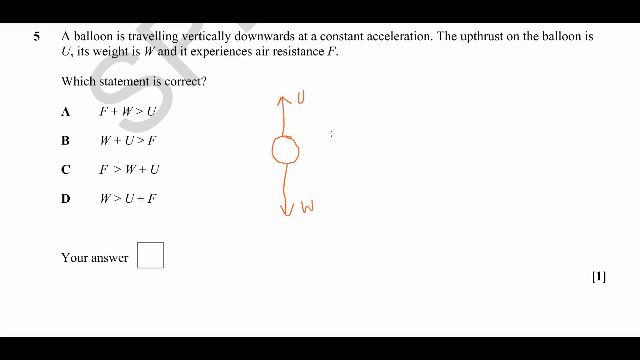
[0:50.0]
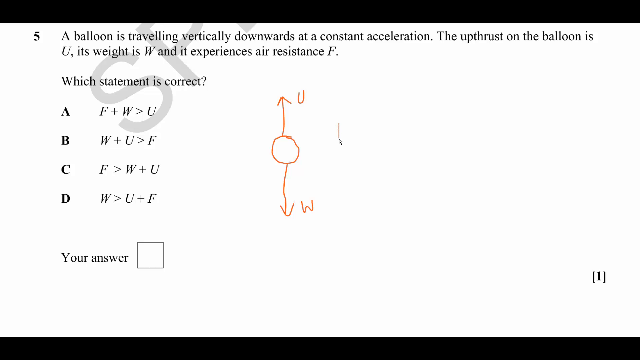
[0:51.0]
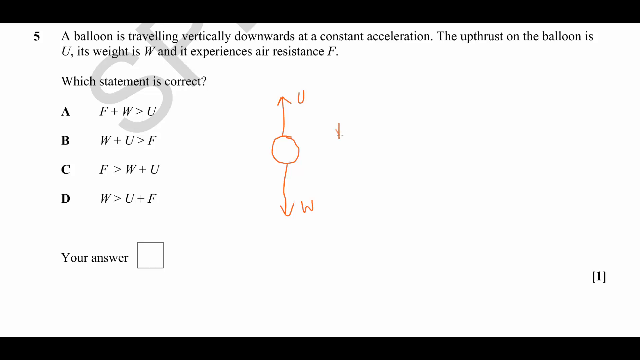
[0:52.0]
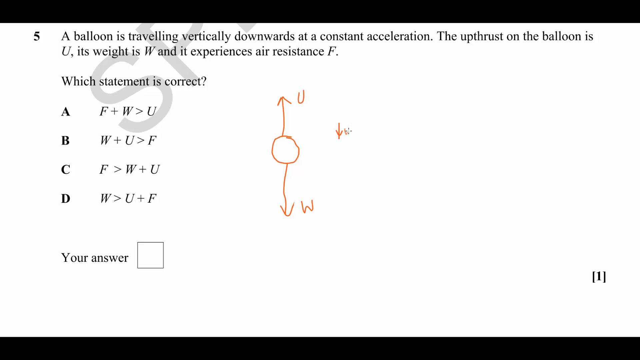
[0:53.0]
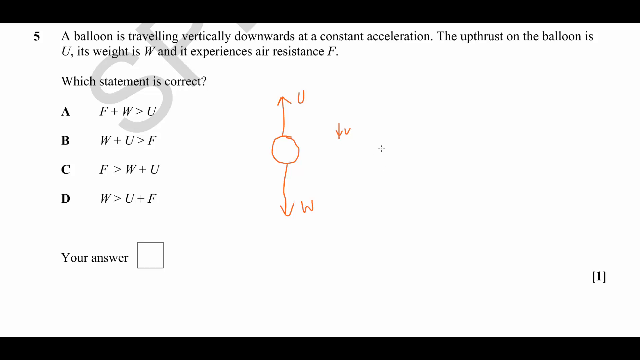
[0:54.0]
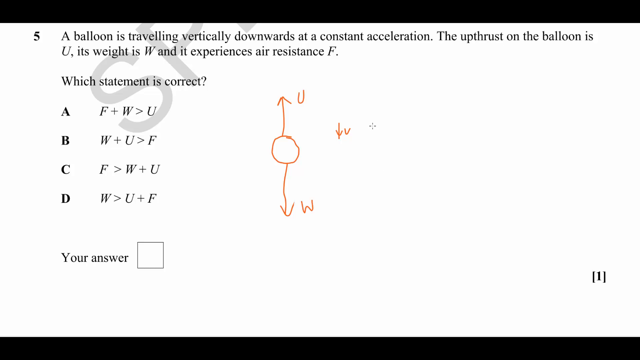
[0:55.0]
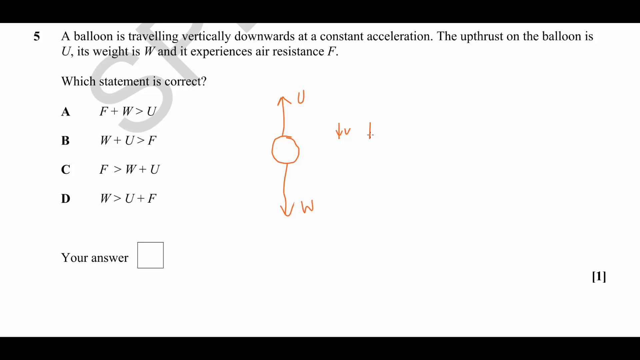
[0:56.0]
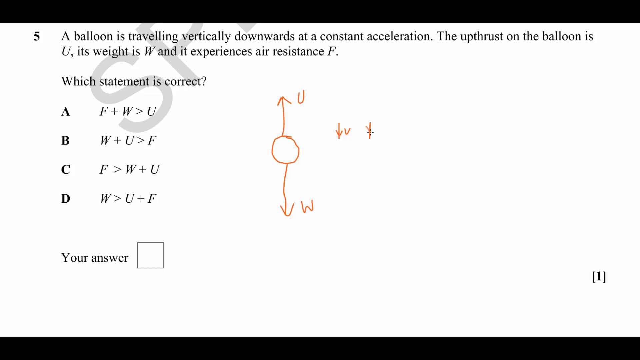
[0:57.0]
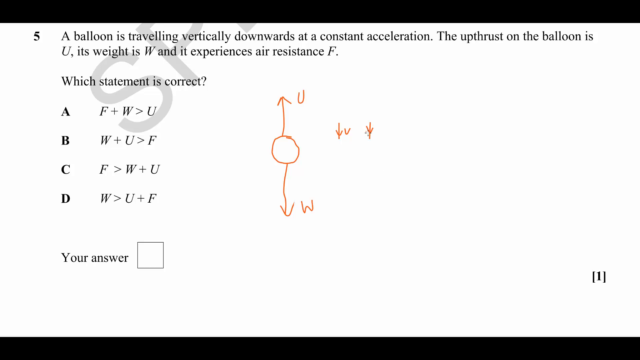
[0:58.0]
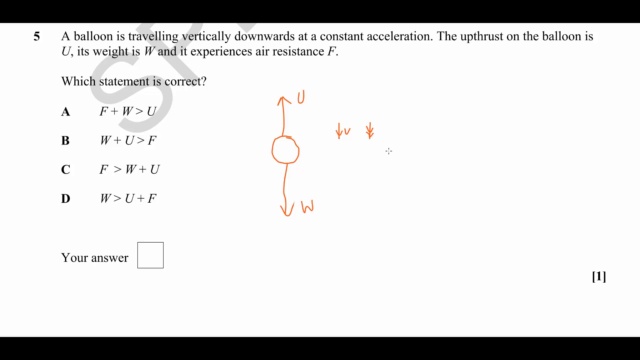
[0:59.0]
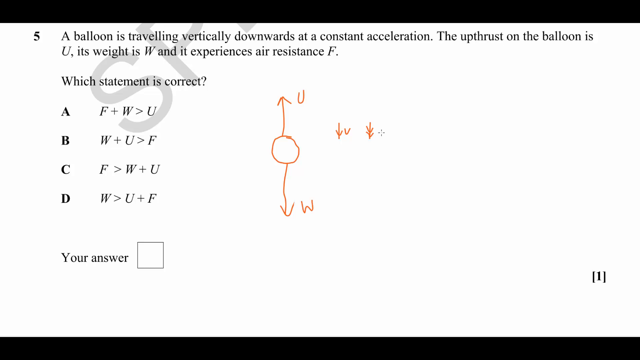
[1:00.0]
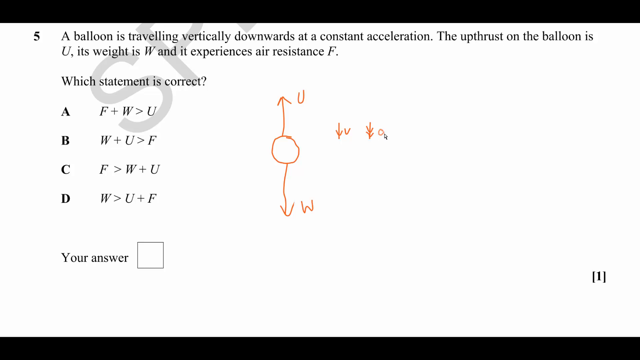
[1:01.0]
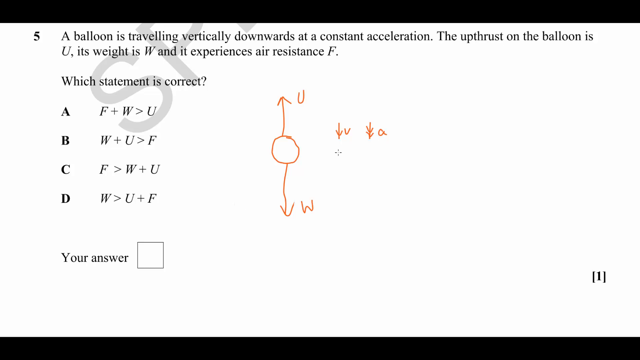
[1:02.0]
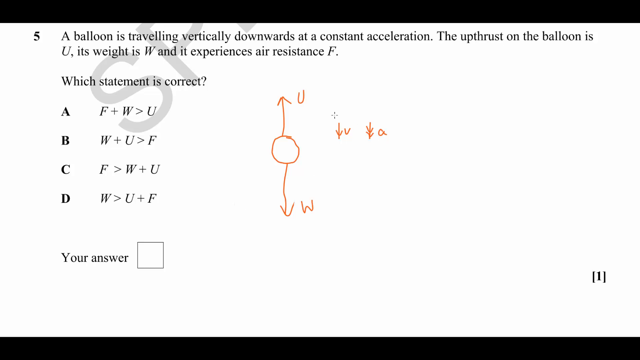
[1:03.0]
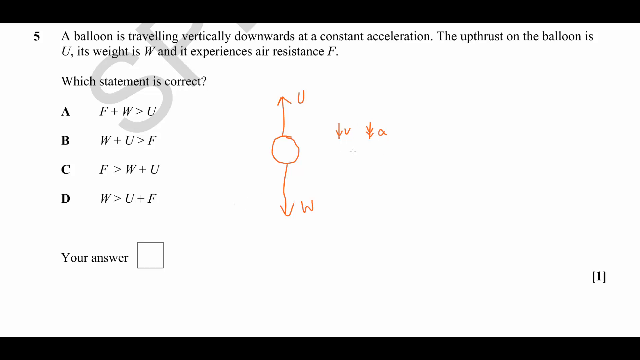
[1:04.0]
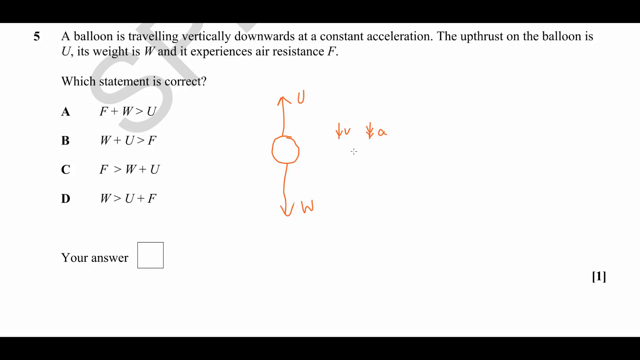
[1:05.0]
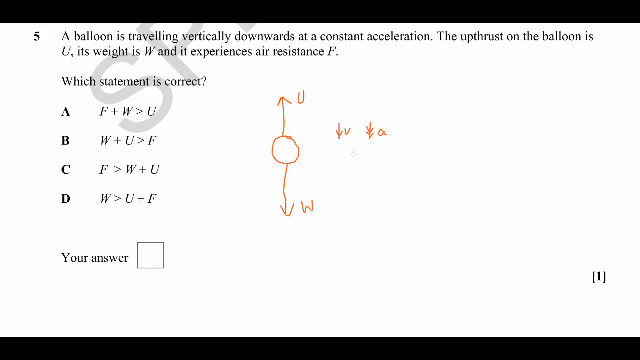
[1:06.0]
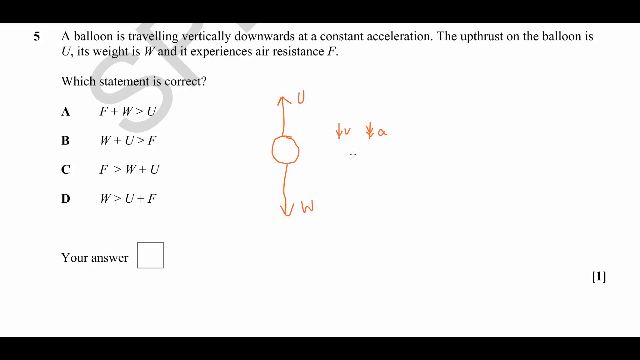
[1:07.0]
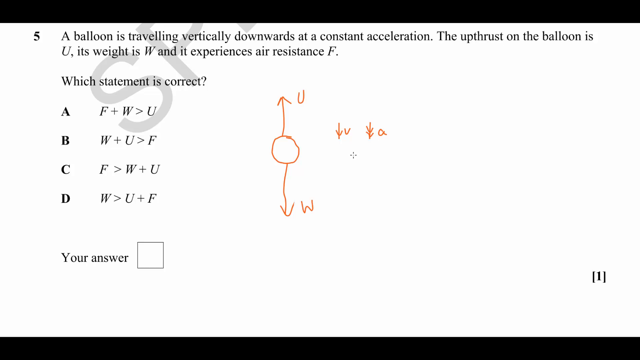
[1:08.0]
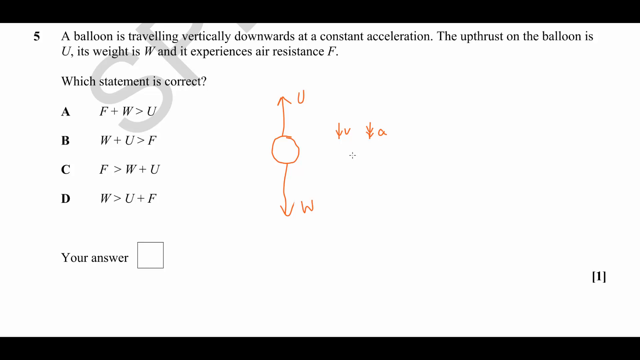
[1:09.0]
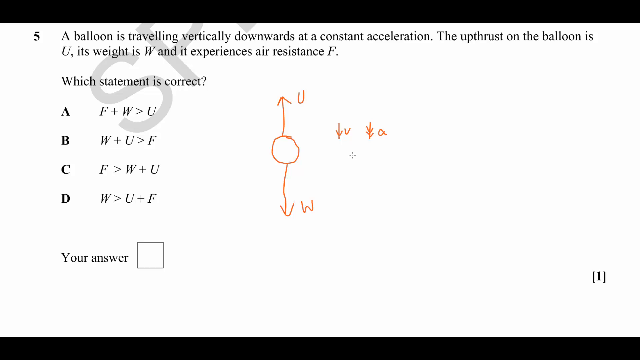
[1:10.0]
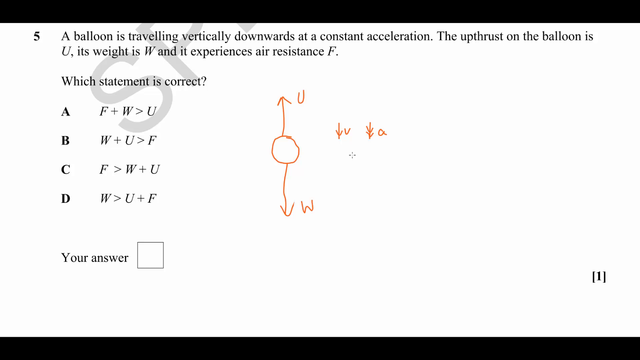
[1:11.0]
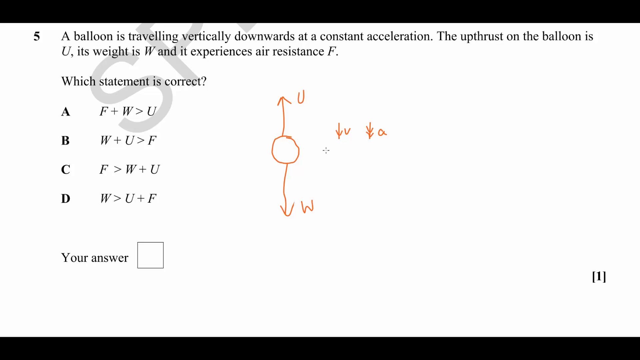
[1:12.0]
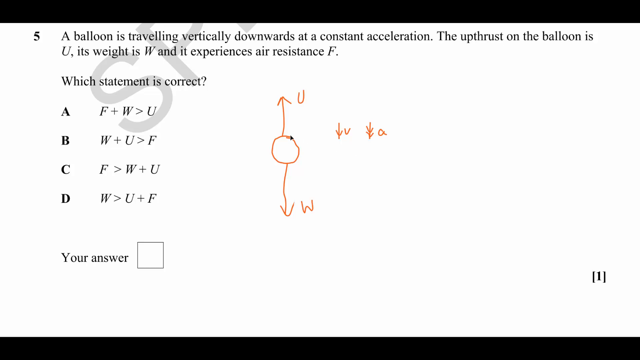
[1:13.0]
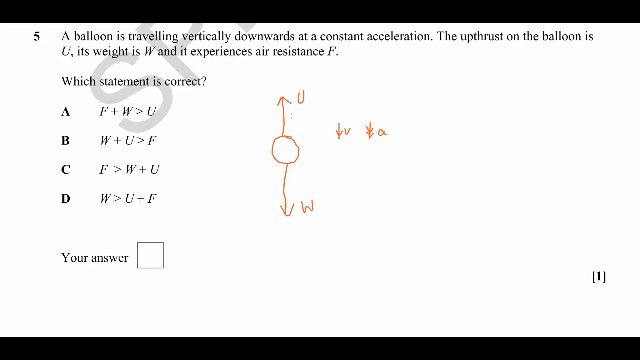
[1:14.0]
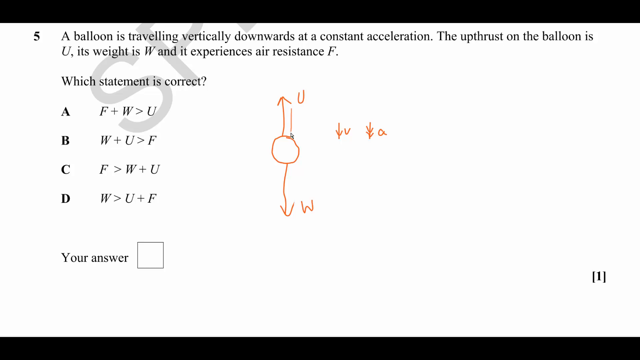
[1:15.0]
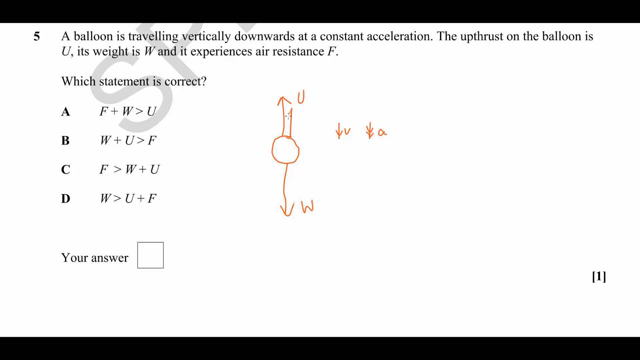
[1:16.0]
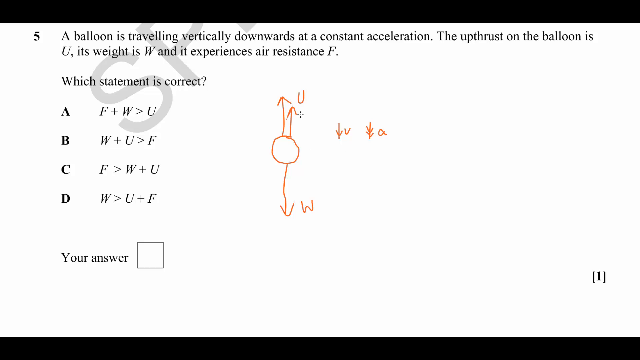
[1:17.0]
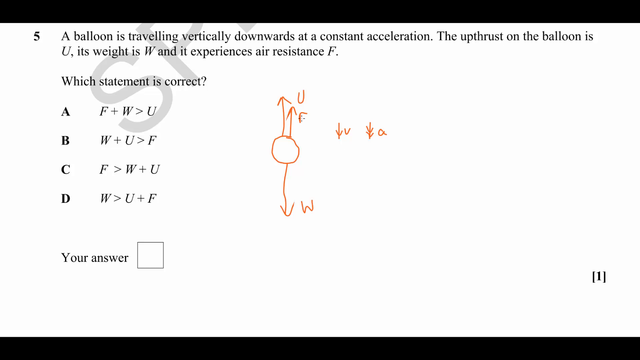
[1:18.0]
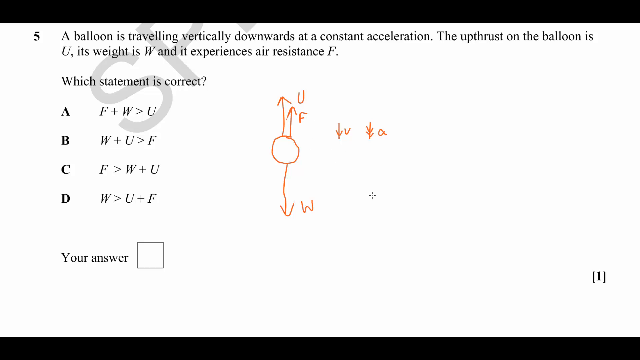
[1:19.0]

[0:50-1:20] The question about a balloon traveling downwards at a constant acceleration provides three constants identified by the letters U, W, and F, and asks which statement is correct, showing relations between them. There is a space for the answer. To the right of the answers, a circle is drawn in marker on the computer, with a line leading up from it ending in an upward arrow labeled U and a line with a downward arrow below it labeled W. The cursor writes another symbol with the letter v beside it, then adds another symbol beside that with the letter a. Using only the cursor, the person circles the new v and its symbol as if to emphasize it. They then draw another arrow beside the upward U arrow and label it F.